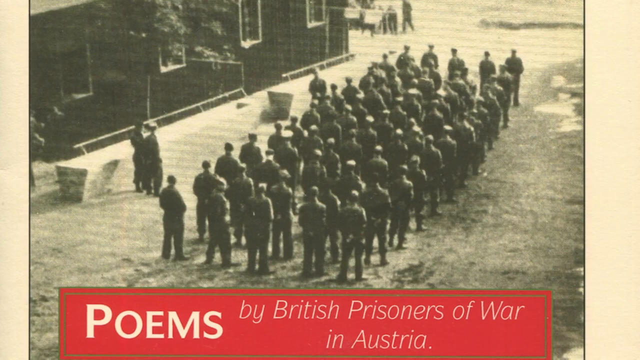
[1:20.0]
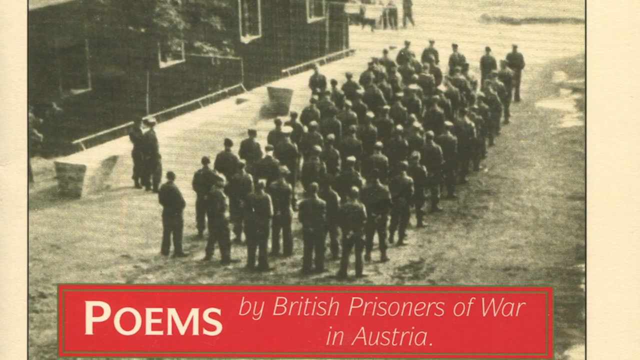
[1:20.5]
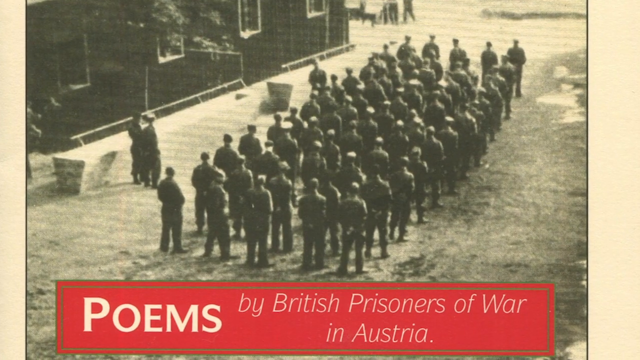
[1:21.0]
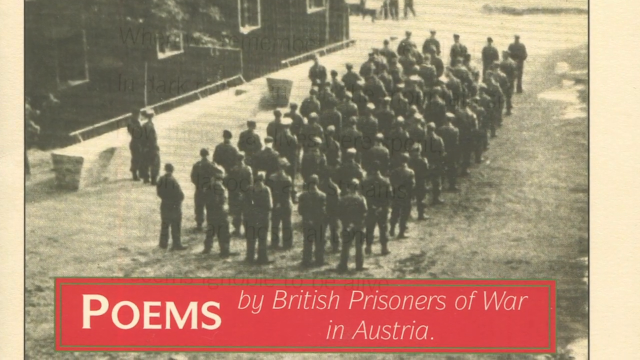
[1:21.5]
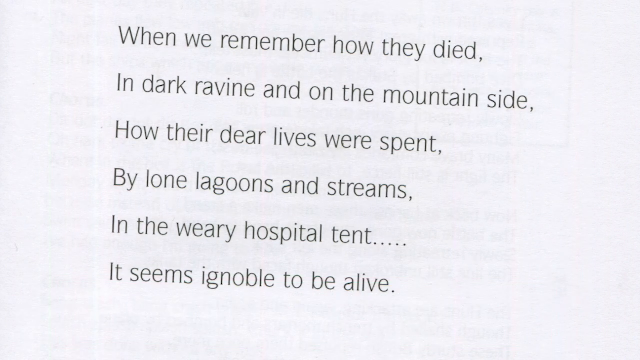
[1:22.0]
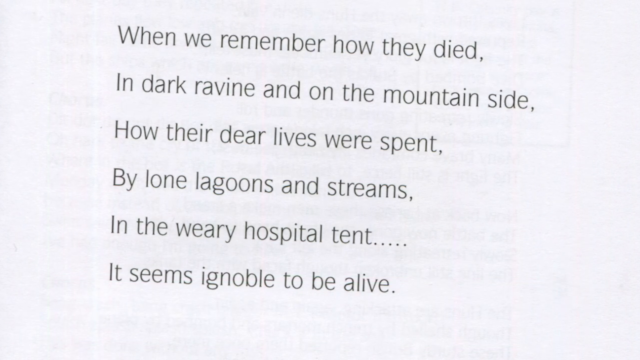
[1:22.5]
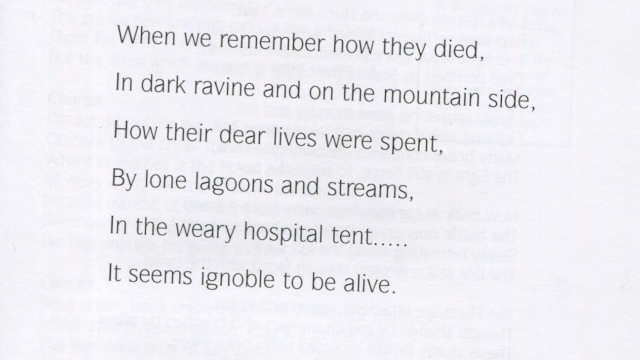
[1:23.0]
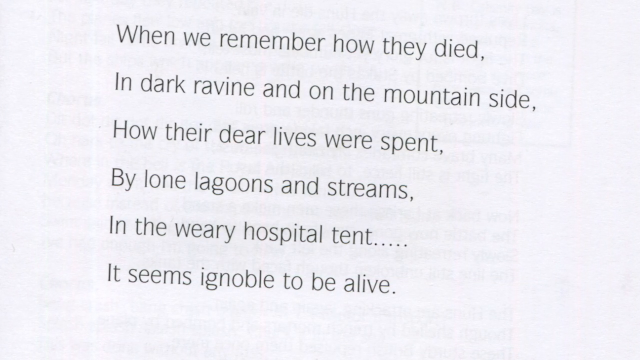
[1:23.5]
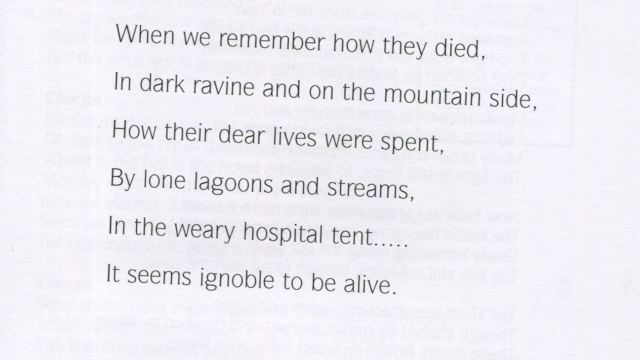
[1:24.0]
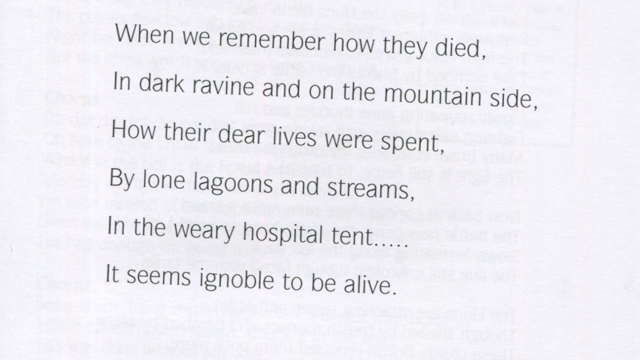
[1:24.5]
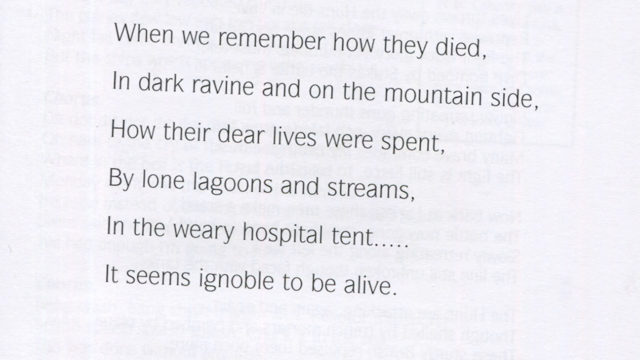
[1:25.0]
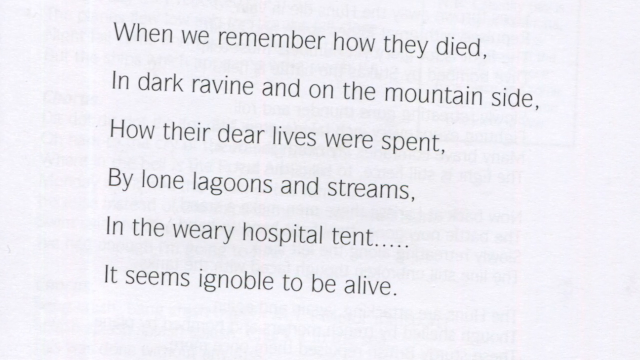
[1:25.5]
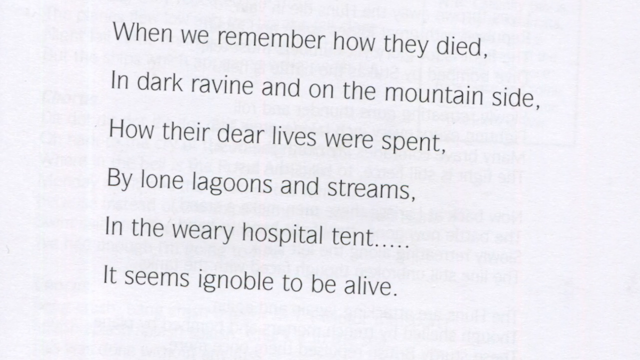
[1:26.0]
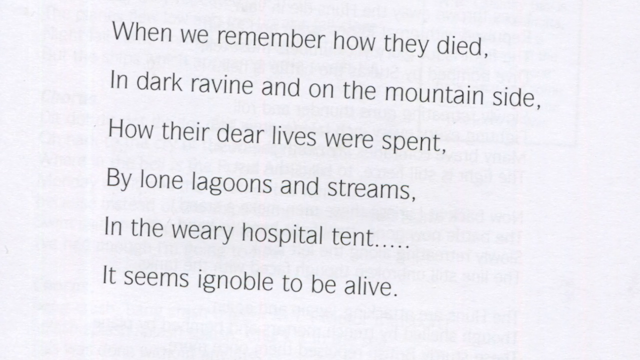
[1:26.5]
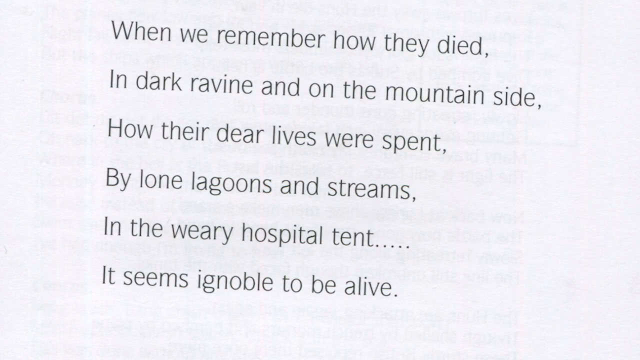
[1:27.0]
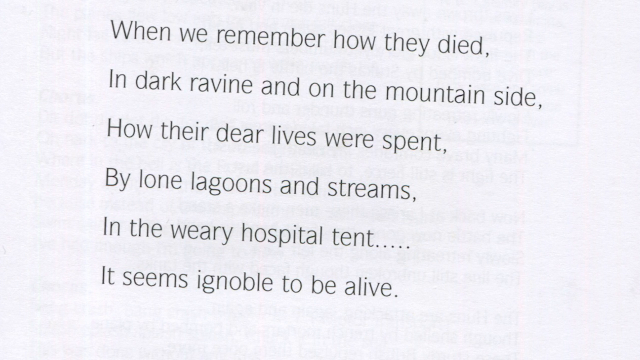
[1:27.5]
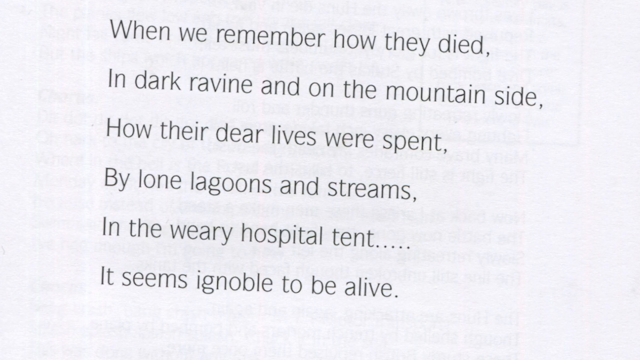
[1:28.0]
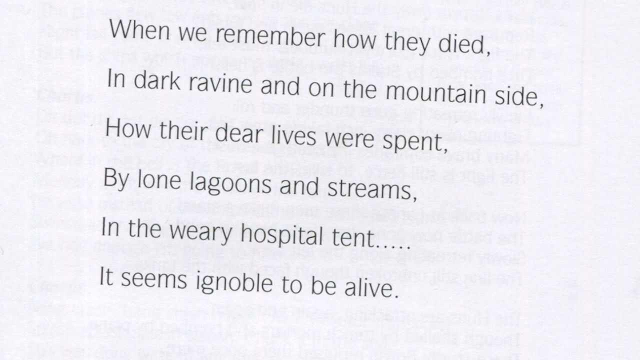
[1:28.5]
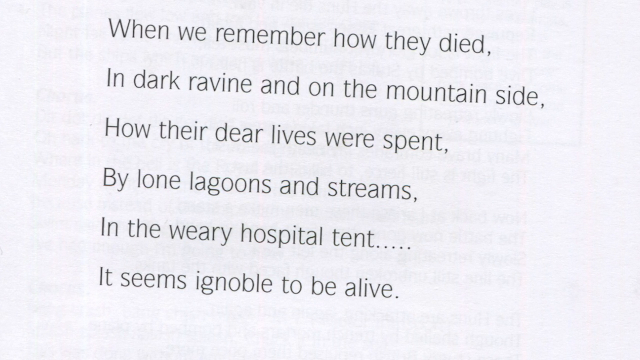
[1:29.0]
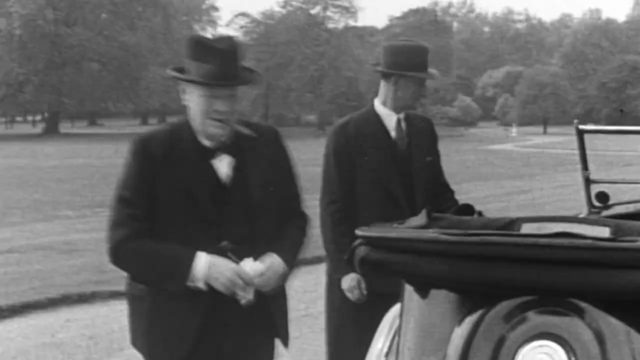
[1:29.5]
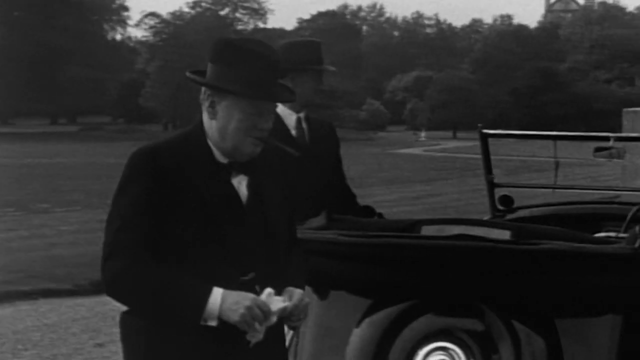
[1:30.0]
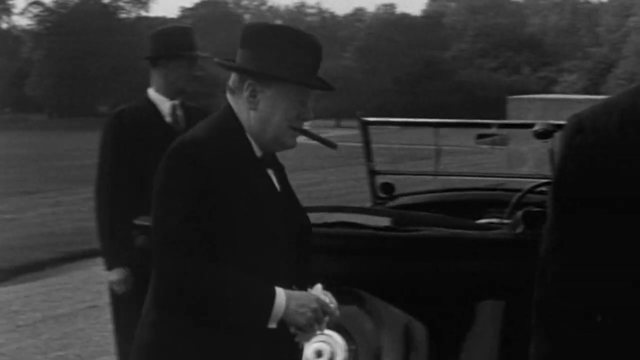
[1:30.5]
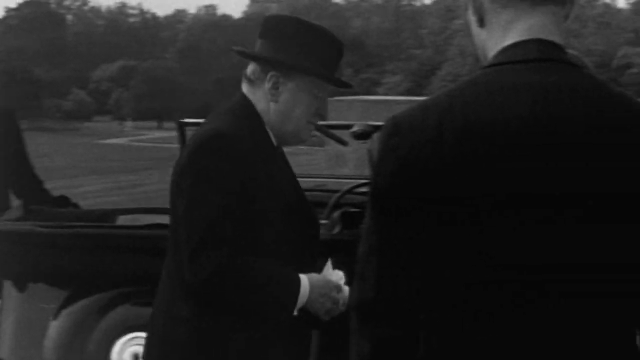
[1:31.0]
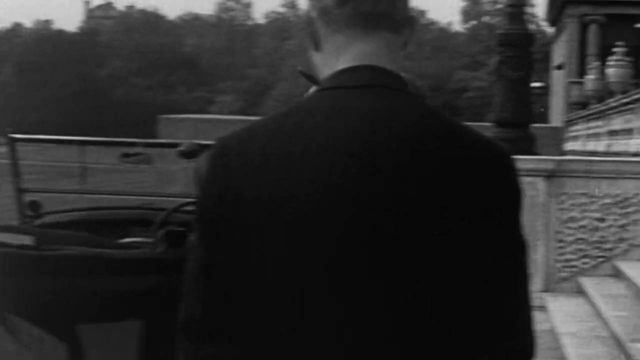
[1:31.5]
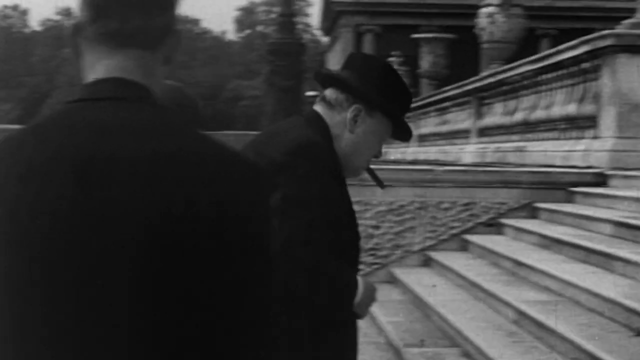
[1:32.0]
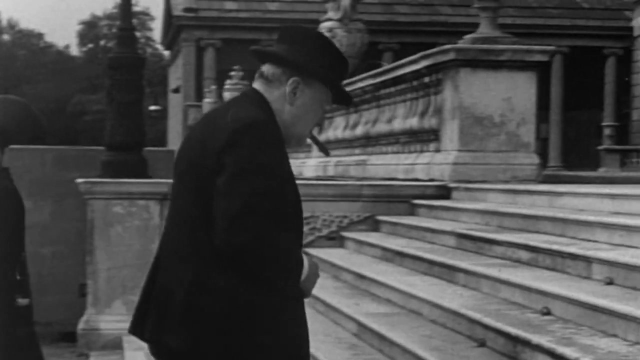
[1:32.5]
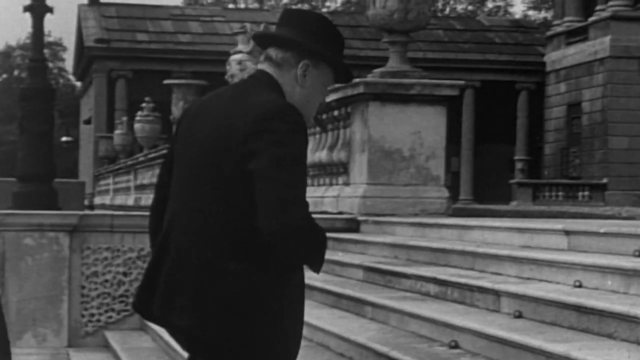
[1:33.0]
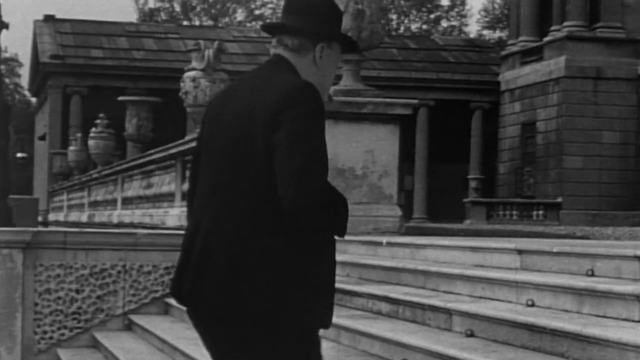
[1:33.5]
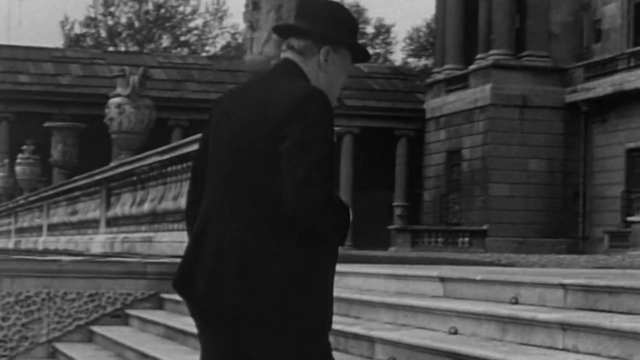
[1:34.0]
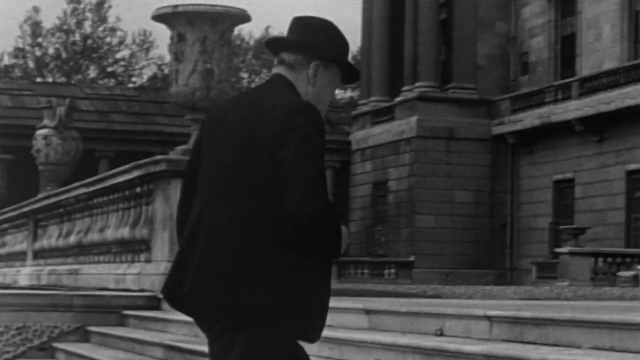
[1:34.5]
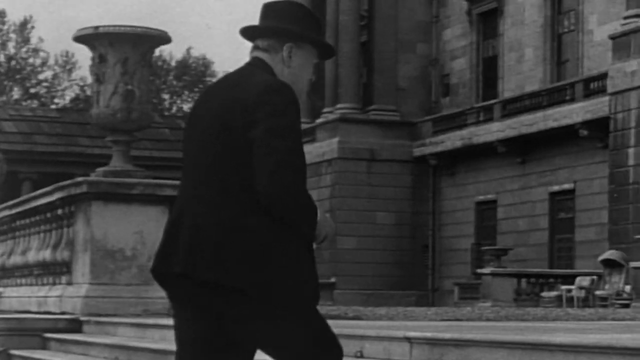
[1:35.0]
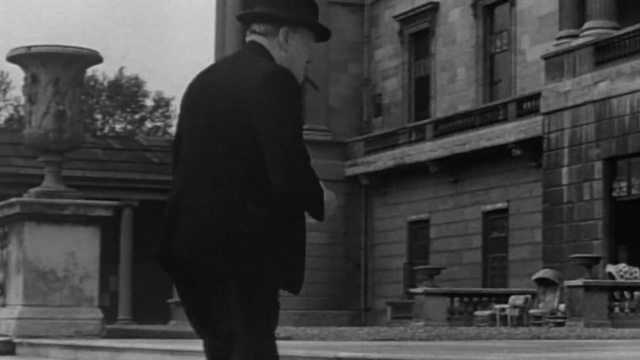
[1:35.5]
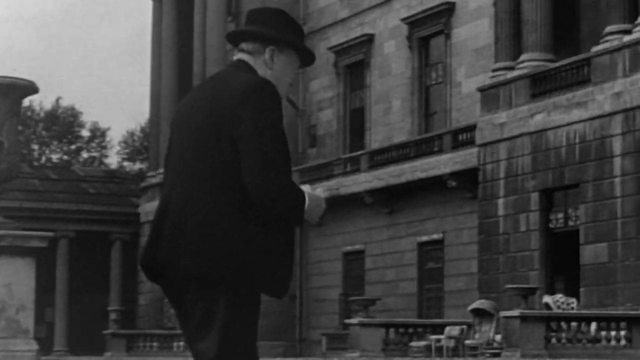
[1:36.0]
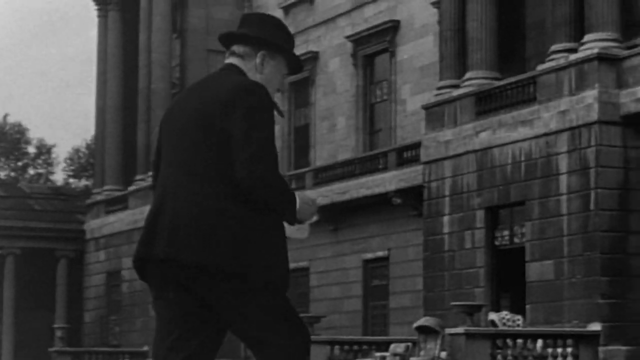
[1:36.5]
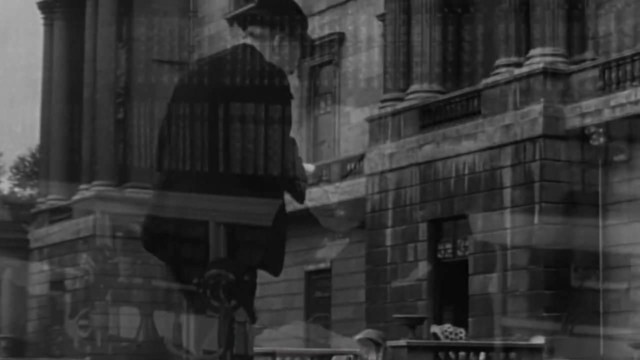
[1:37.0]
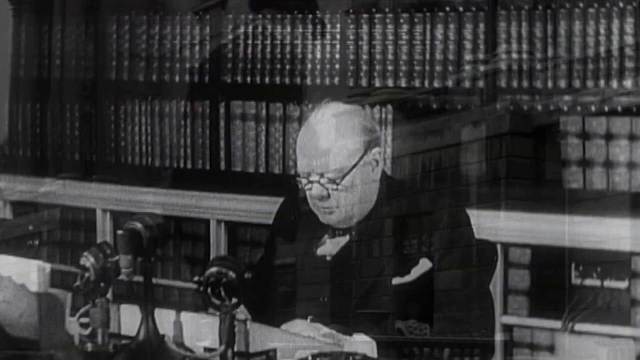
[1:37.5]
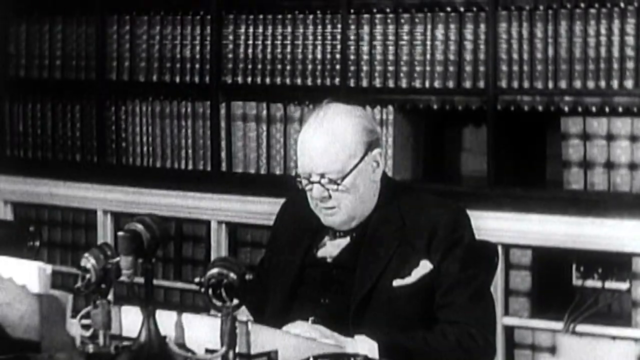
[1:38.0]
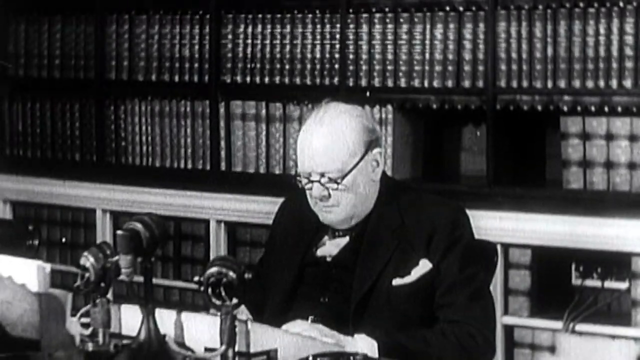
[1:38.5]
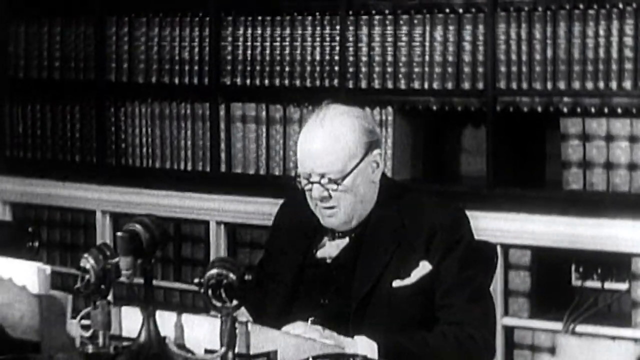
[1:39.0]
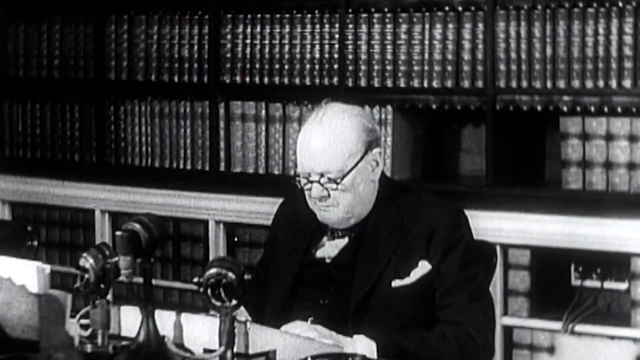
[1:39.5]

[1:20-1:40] A black-and-white picture shows men standing around in rows in the middle of a roadway, with a building in the upper right corner. Text at the bottom reads "poems." The video moves to a white background with the text of a poem, beginning "When we remember how they died" and including the line "It seemed so noble to be alive." Black-and-white footage then shows a man outdoors in a suit and bowler hat approaching a car with a driver standing there. With a cigar in his mouth, the man climbs steps into the interior of a building, and is then seated and speaking; it looks as if he is Winston Churchill.